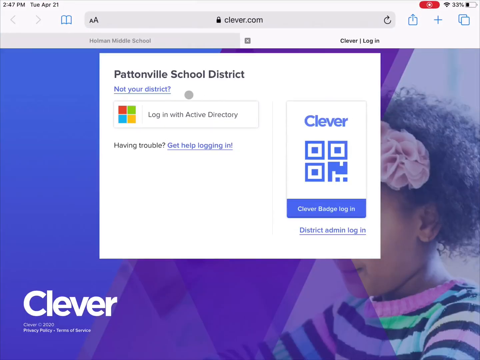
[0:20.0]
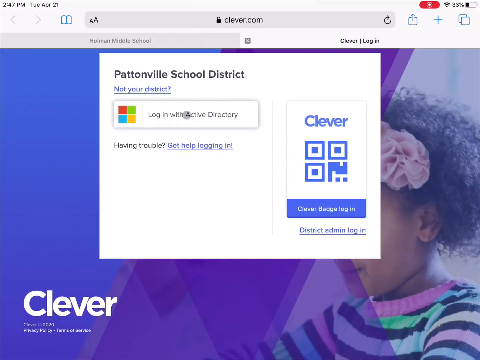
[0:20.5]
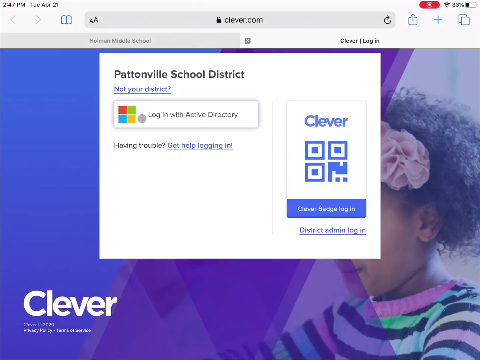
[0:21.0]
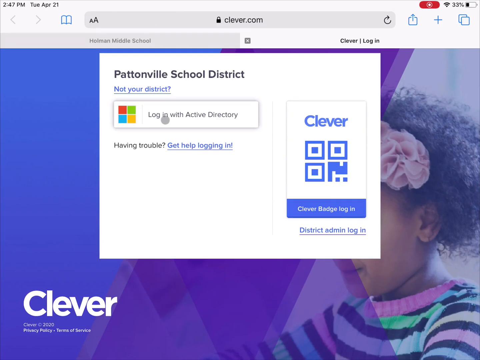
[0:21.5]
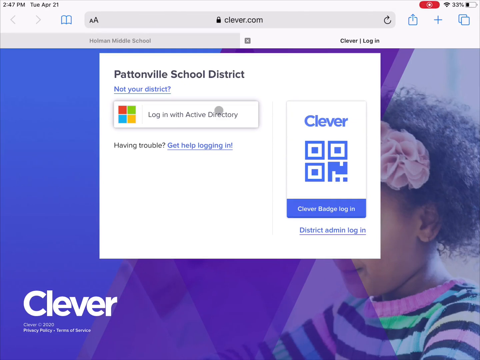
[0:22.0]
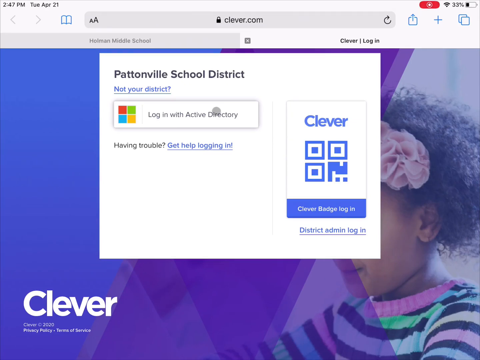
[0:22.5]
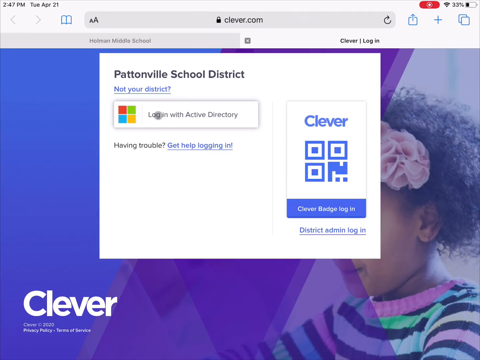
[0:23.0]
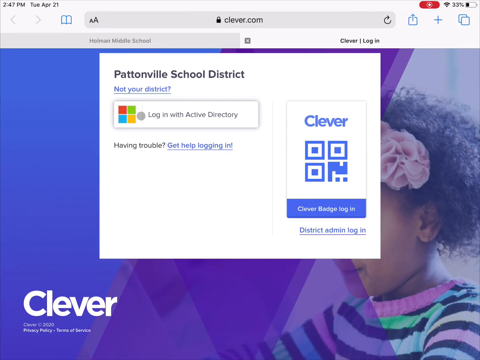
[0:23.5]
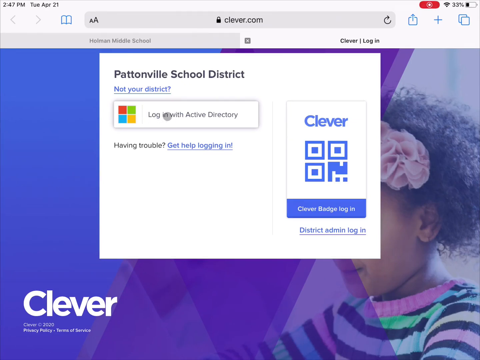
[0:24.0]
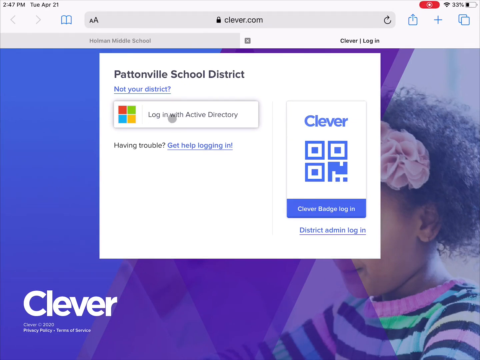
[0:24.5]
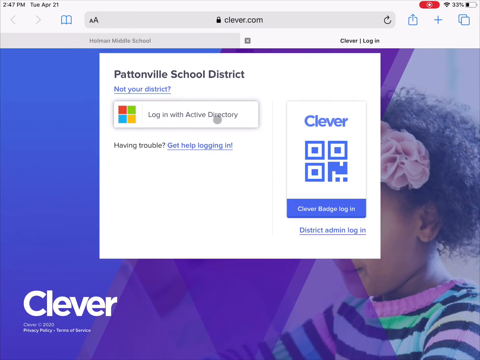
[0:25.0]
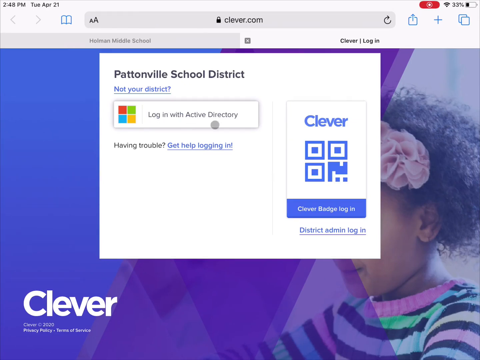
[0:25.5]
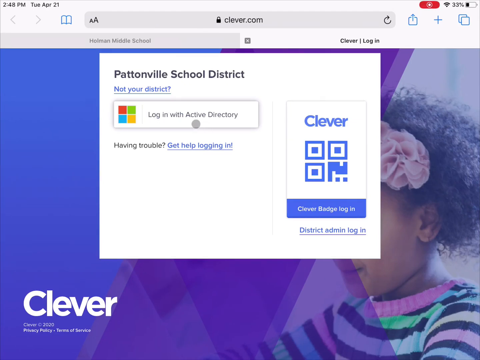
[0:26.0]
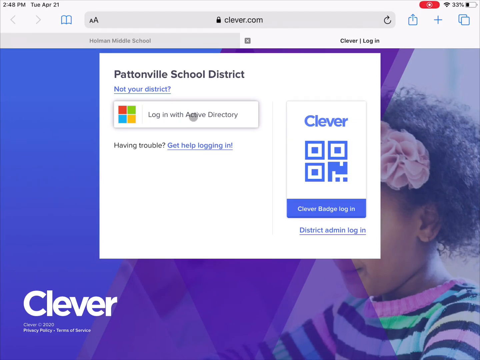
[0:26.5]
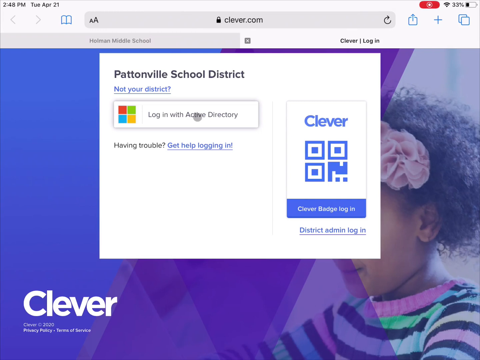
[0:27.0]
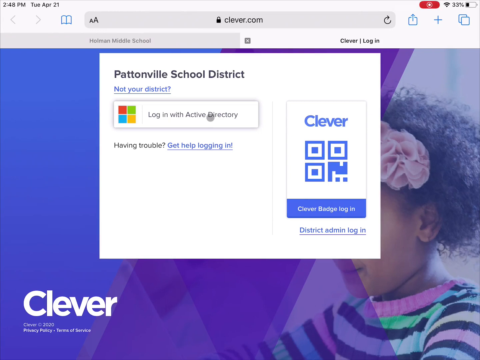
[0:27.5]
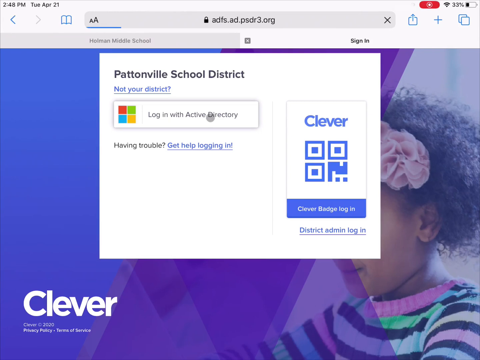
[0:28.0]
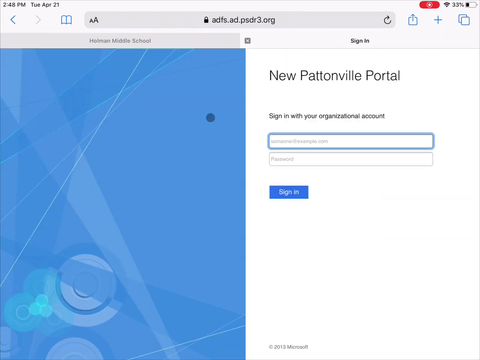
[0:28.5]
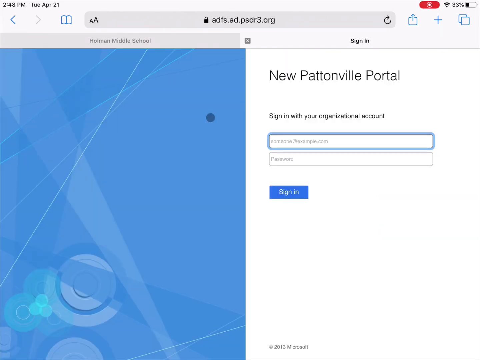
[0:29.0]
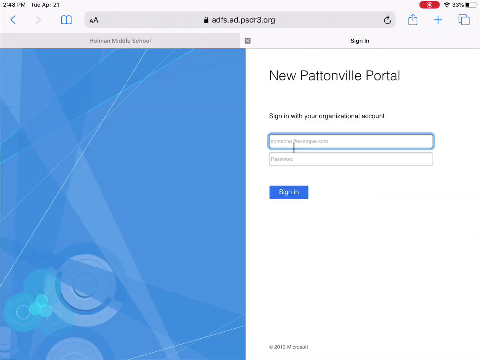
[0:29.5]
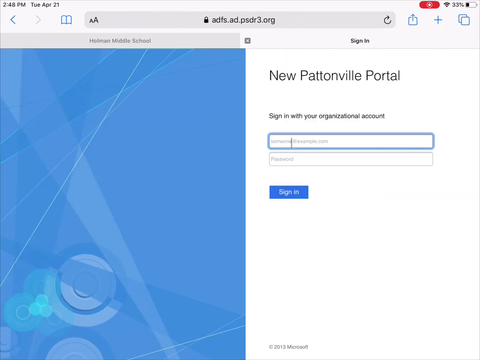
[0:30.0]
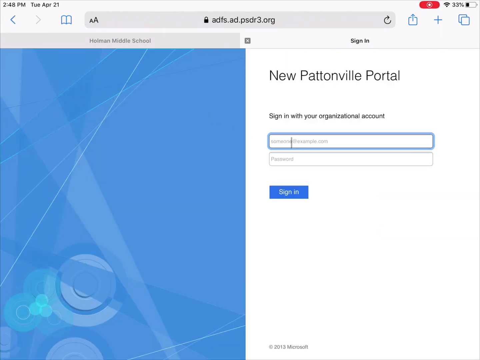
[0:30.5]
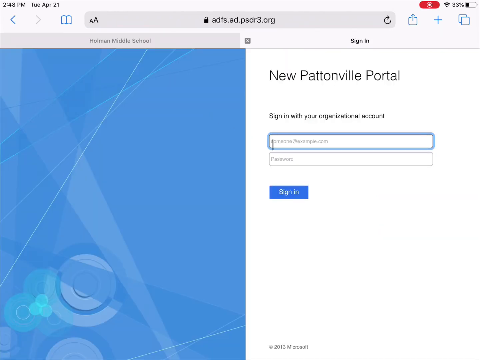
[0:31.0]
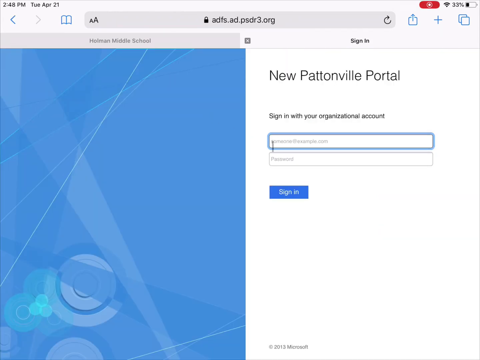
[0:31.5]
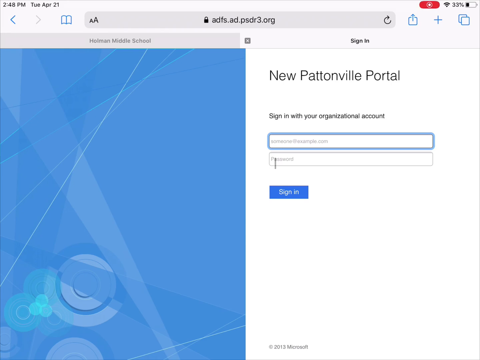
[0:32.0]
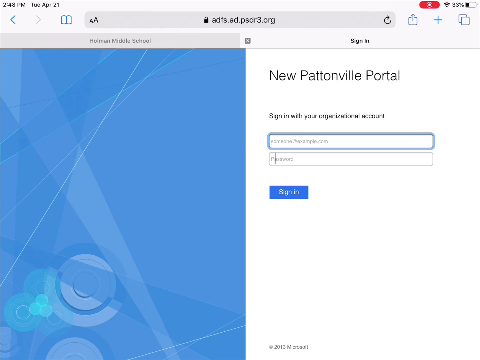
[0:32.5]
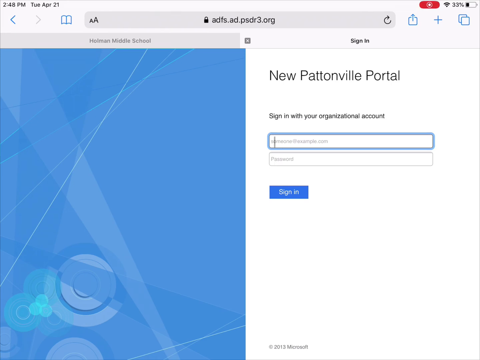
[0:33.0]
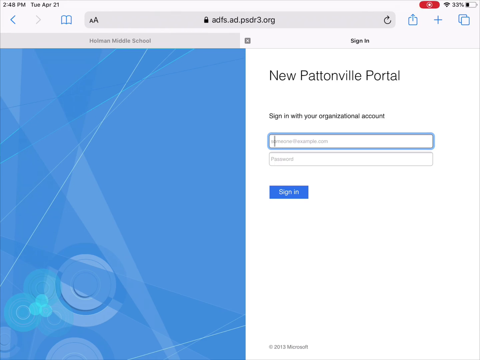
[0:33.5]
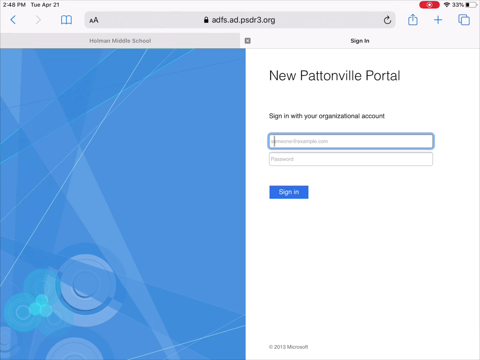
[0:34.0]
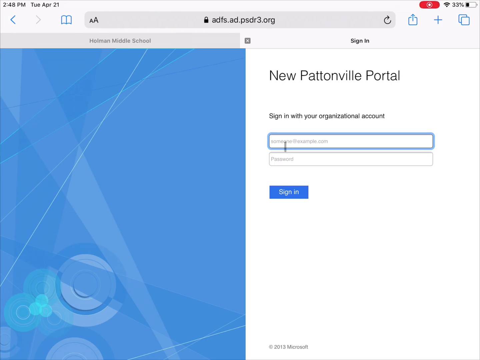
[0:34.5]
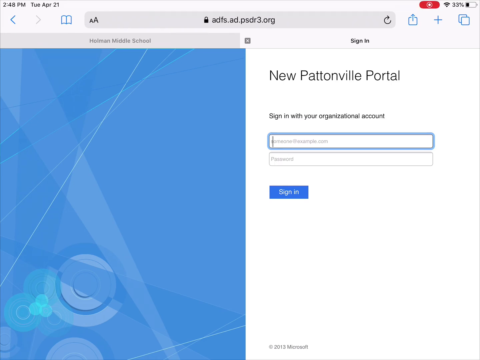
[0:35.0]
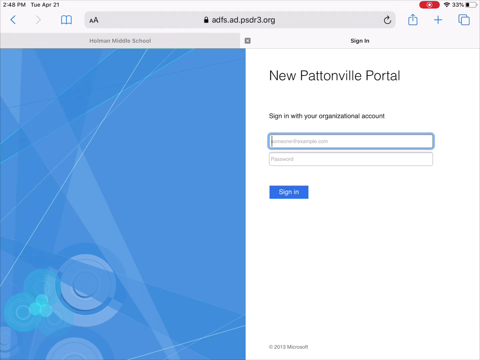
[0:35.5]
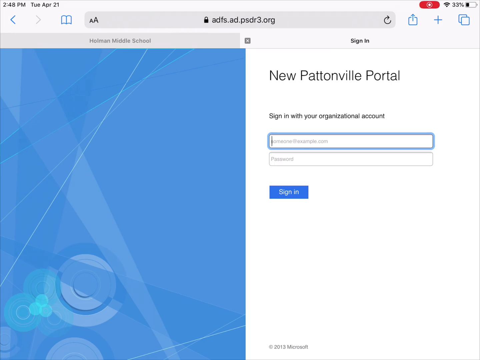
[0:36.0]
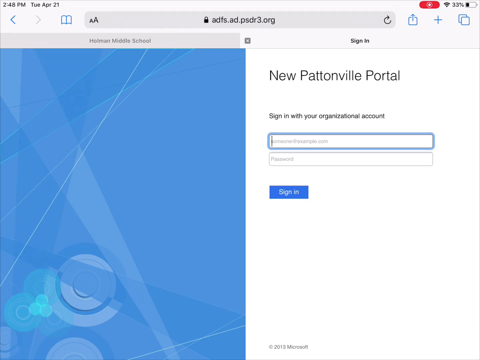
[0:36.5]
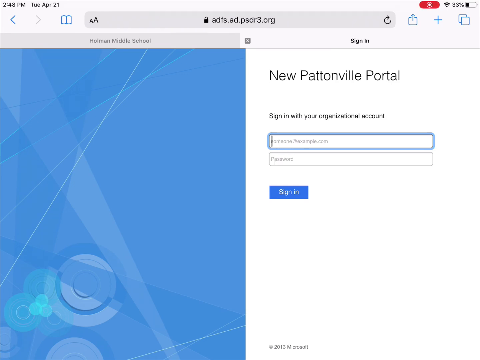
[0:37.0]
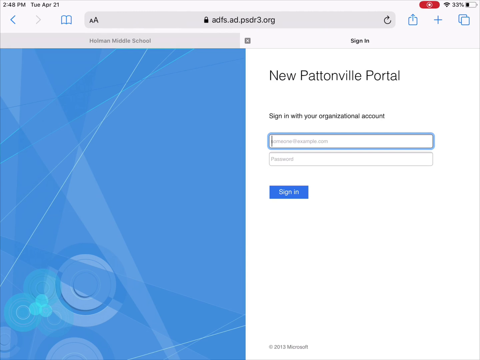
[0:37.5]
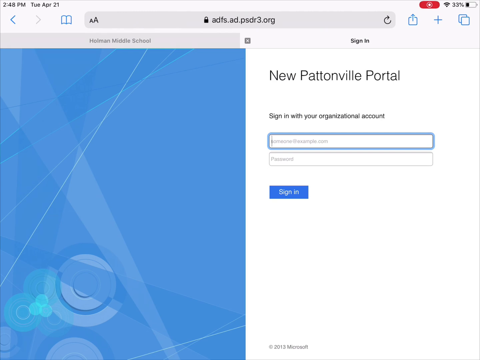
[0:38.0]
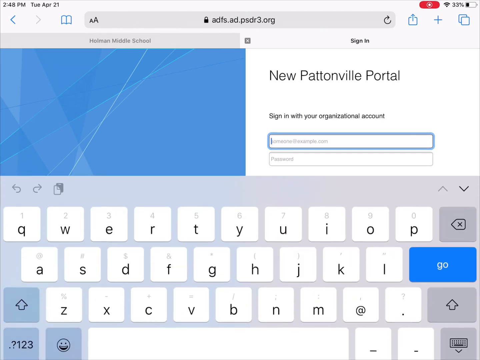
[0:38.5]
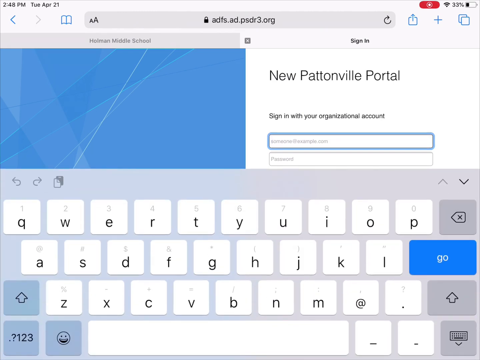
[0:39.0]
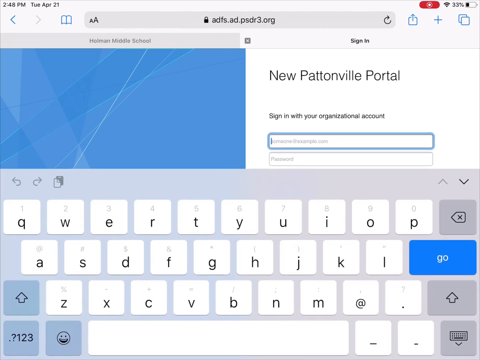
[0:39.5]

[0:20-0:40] On the MacBook, Safari is still being used to log into the Clever app. The same picture of the teacher with a dog is shown. Another portal then pops up, a new Pattern View portal for the Pattern View School District, with a prompt to log in with Active Directory.